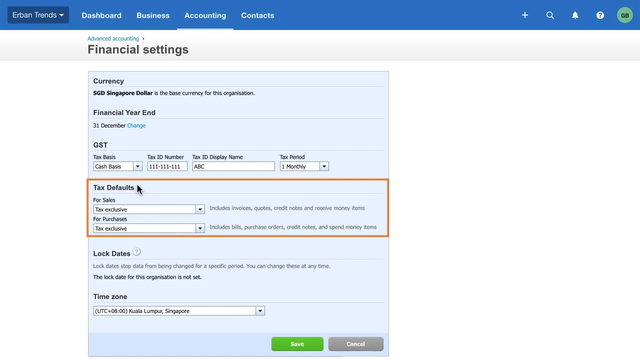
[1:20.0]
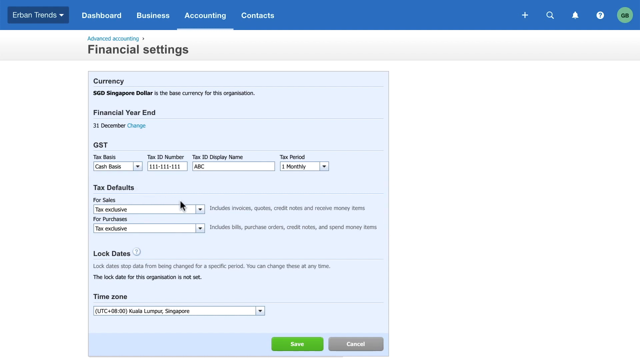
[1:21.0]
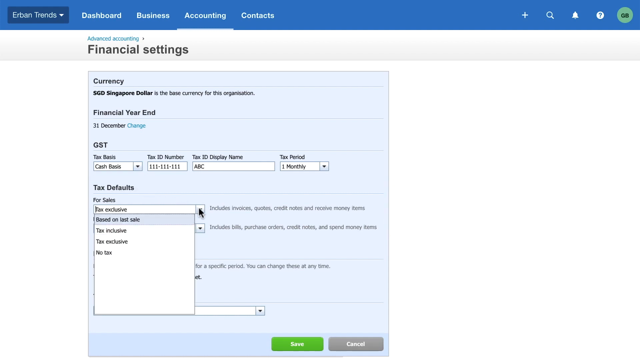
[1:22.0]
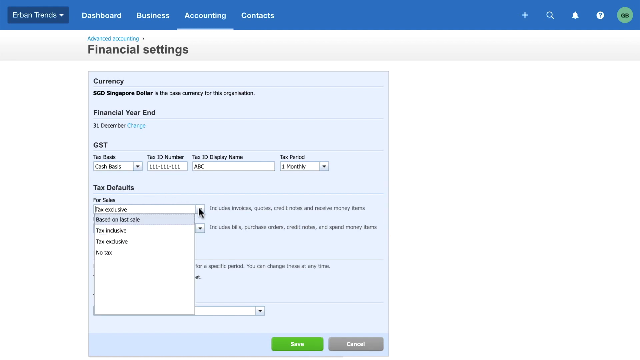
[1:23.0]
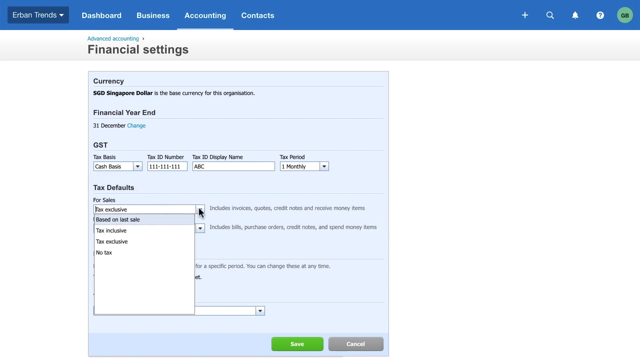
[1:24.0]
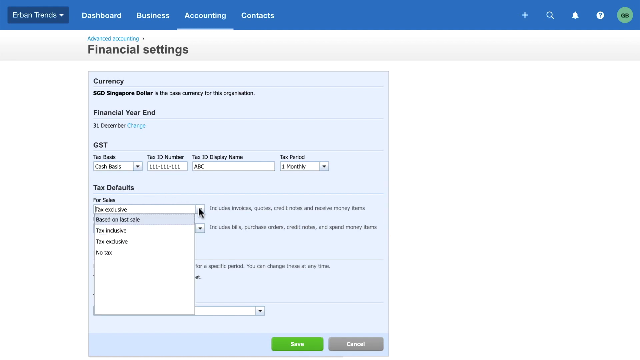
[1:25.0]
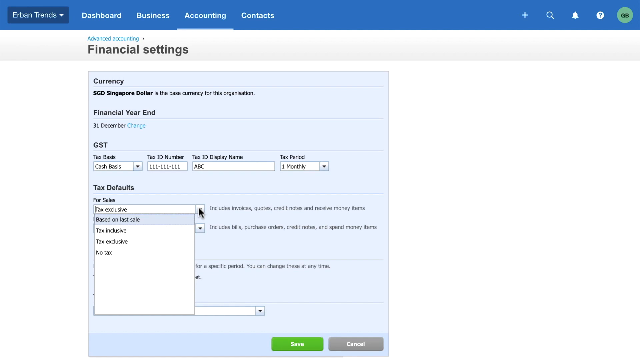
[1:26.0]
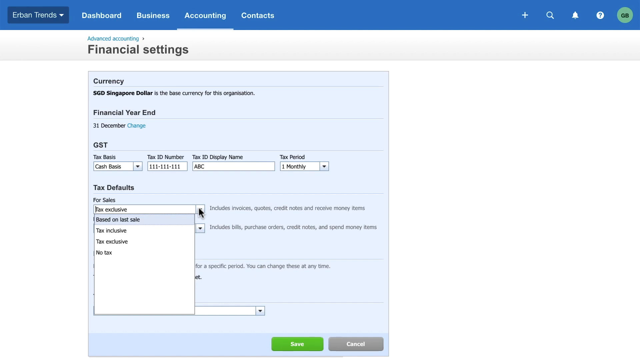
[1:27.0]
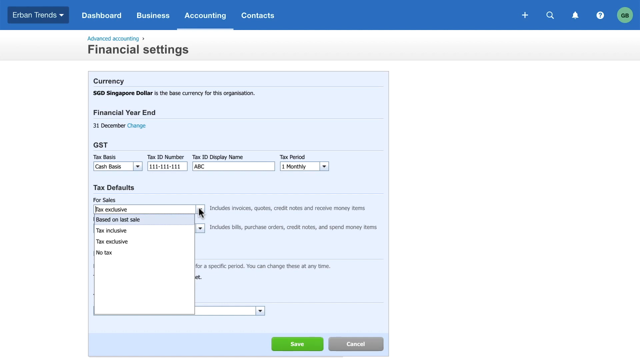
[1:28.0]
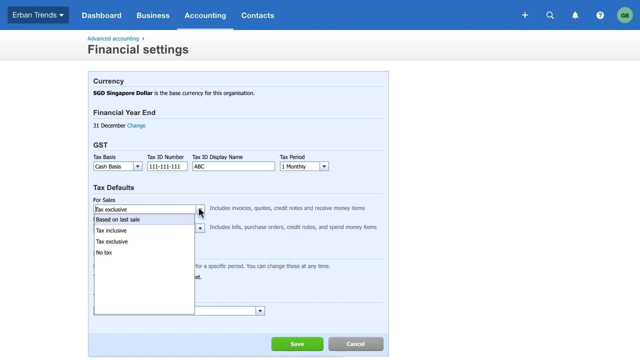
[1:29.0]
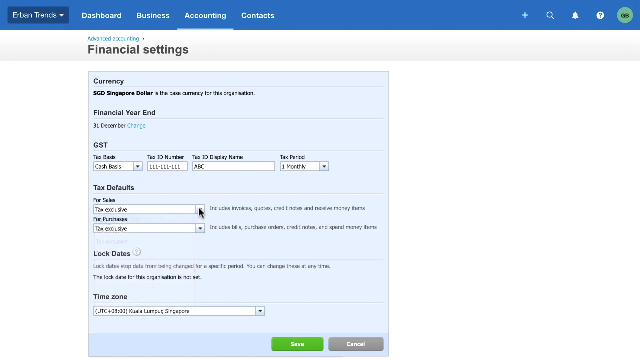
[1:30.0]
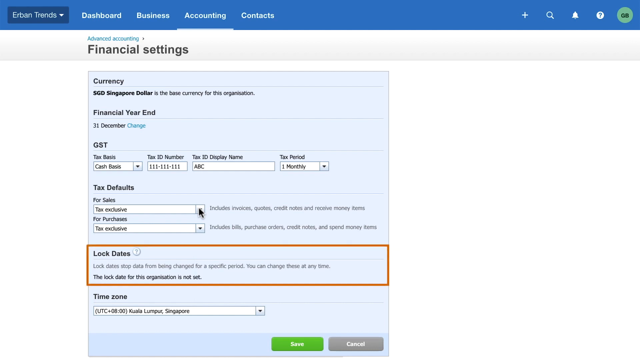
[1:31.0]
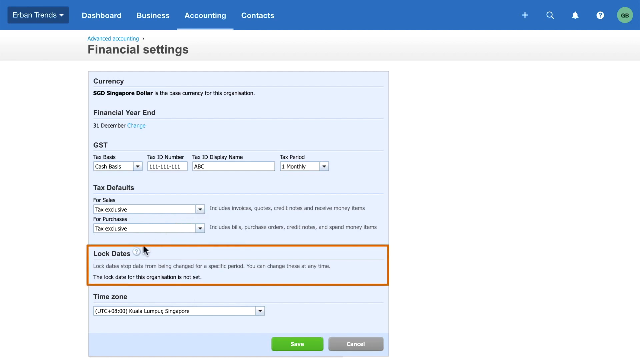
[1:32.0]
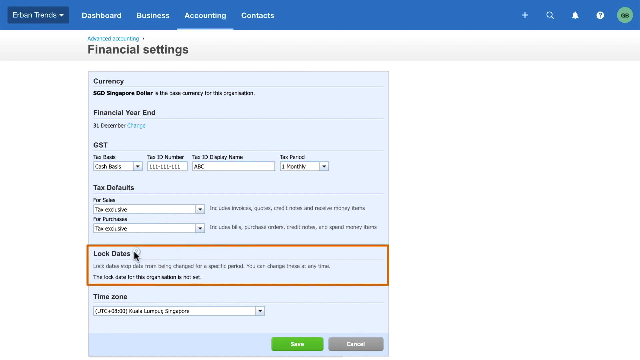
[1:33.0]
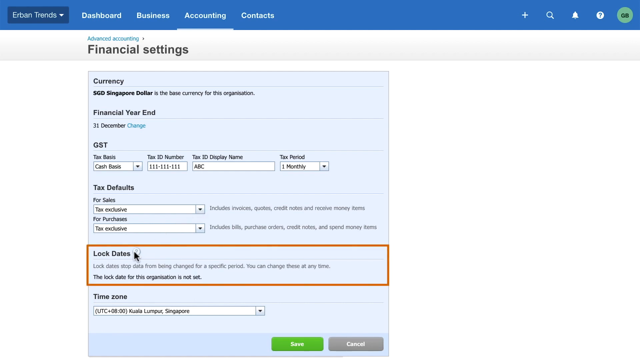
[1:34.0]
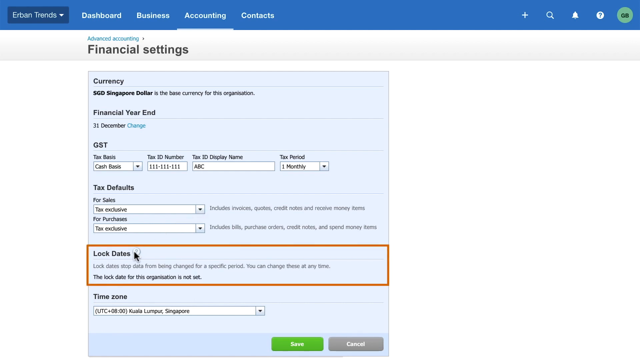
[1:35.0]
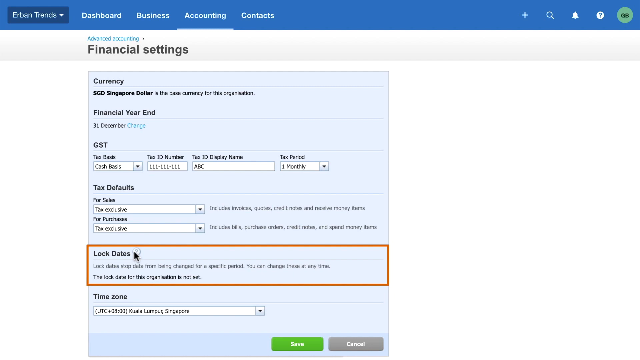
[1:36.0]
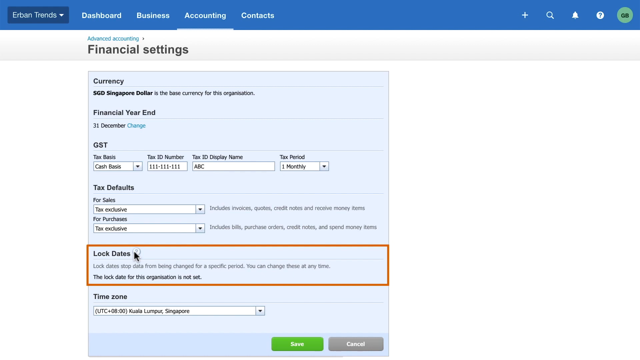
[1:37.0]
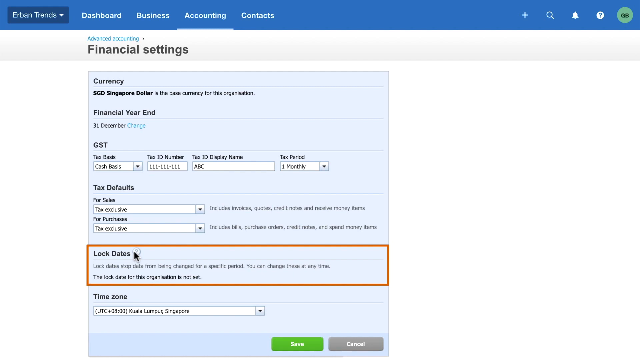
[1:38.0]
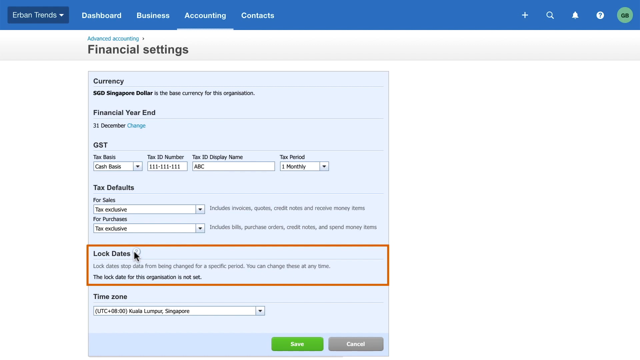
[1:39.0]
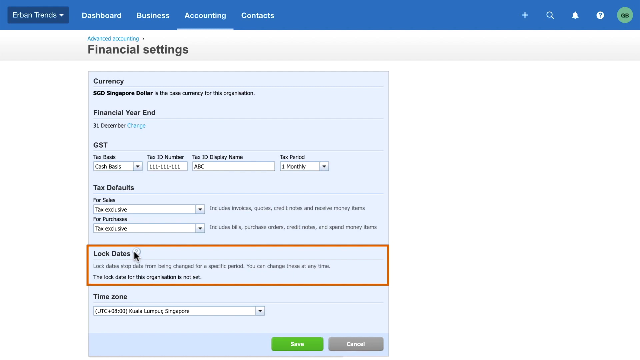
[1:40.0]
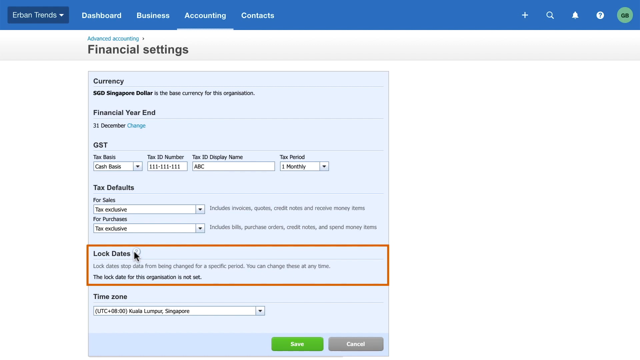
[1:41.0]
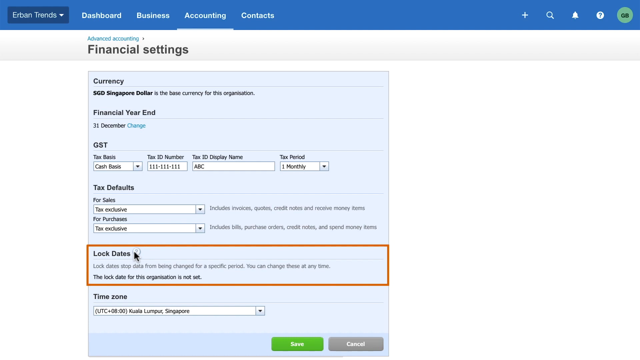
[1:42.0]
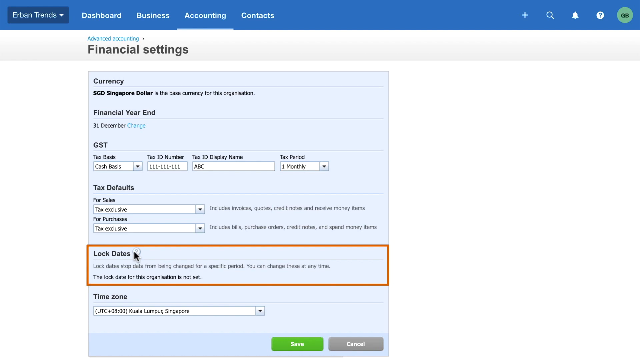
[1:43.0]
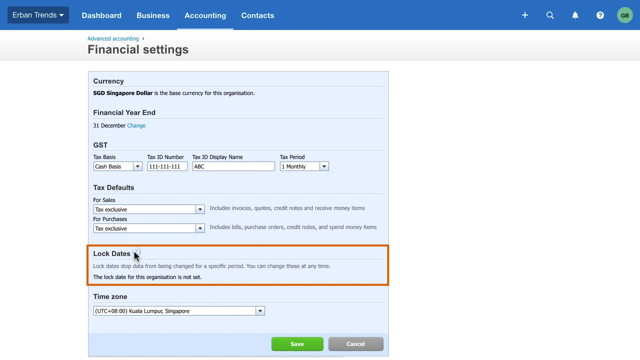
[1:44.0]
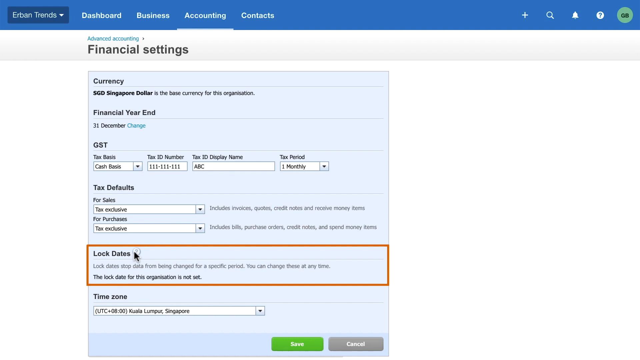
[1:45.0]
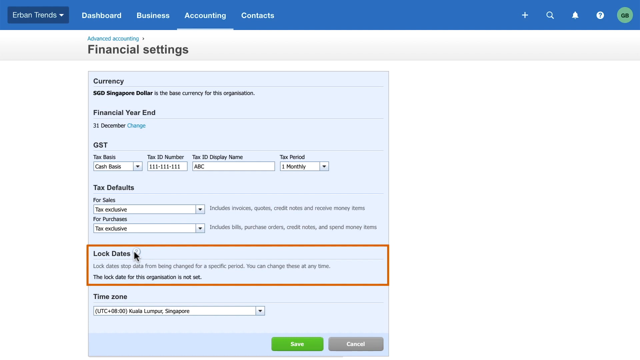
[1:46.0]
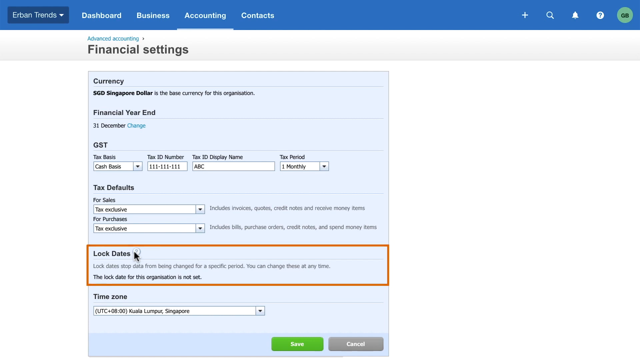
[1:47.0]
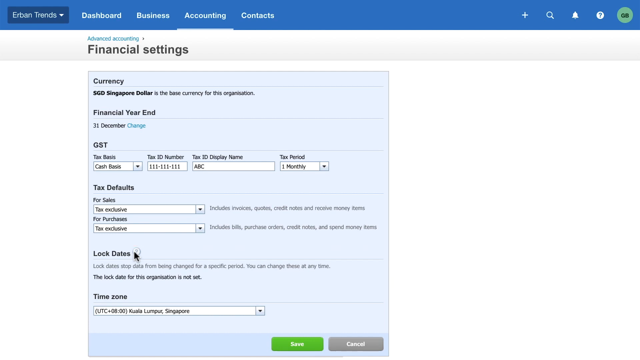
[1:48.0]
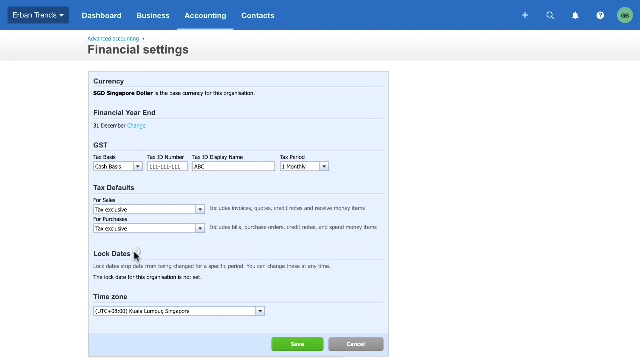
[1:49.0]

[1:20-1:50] The cursor clicks on the "for sales" field, opening a dropdown menu with options including "based on last sale," tax exclusive and no tax. The next section, lock dates, is then highlighted with an orange border. Its text reads that lock dates stop data from being changed for a specific period and that "you can change these at any time," along with "the lock dates for this organization is not set."